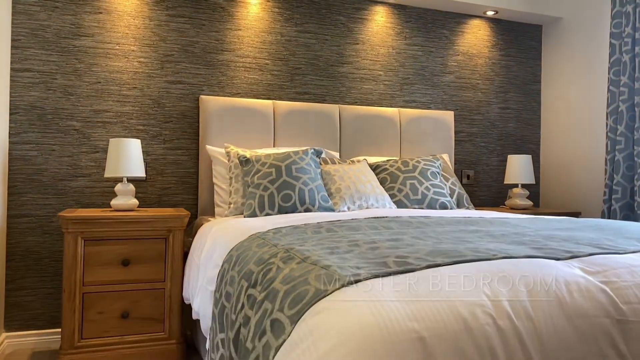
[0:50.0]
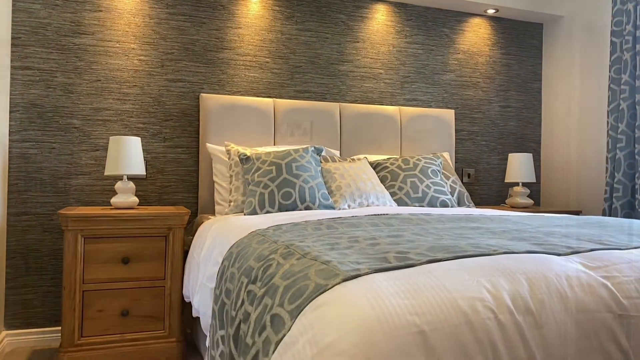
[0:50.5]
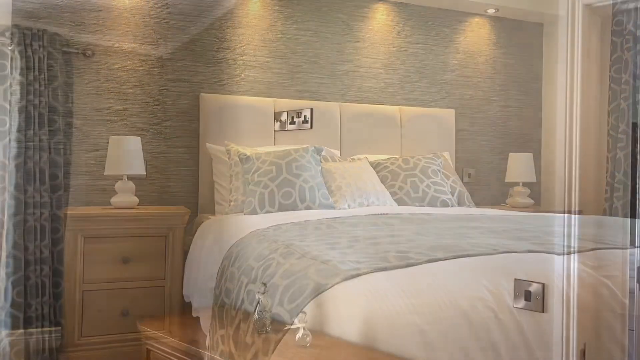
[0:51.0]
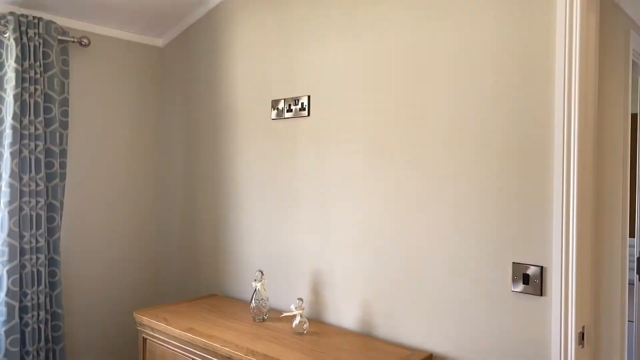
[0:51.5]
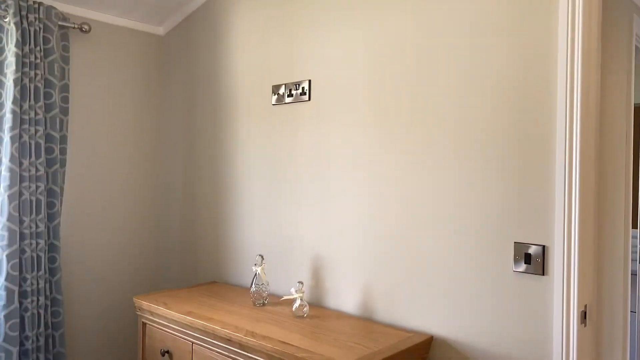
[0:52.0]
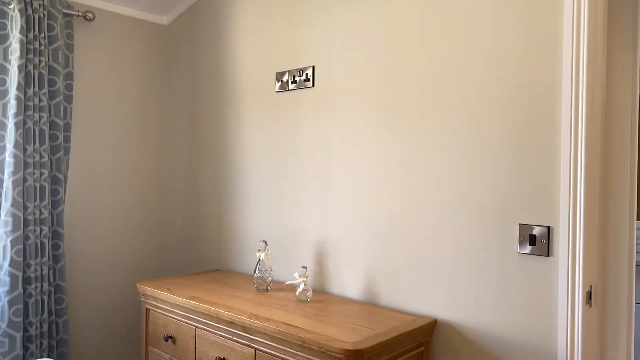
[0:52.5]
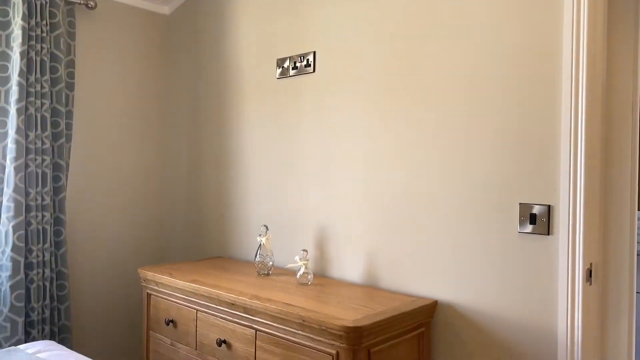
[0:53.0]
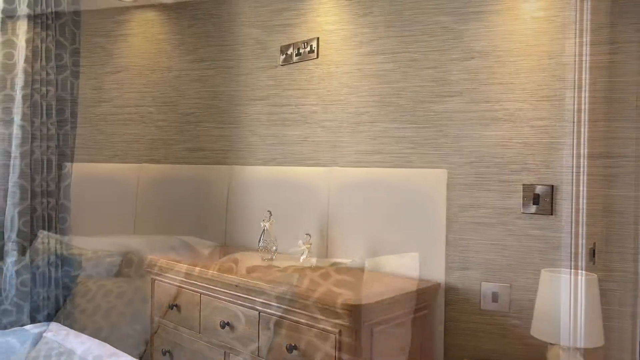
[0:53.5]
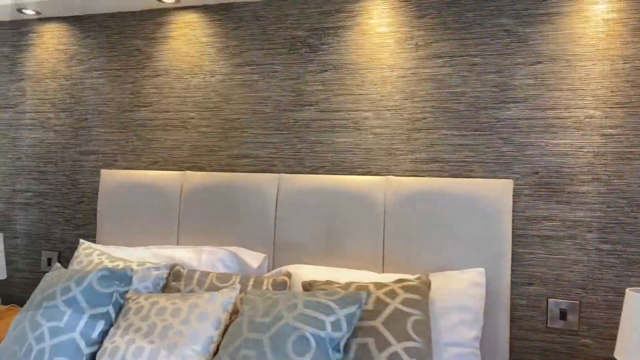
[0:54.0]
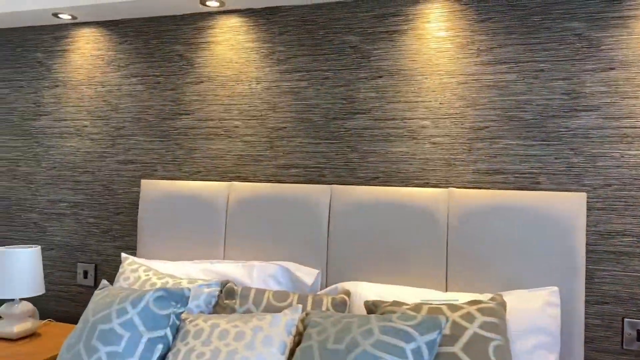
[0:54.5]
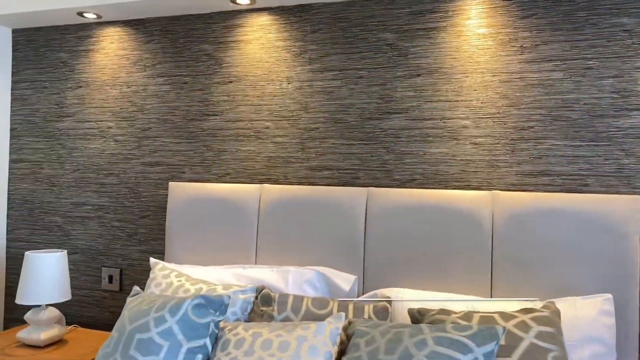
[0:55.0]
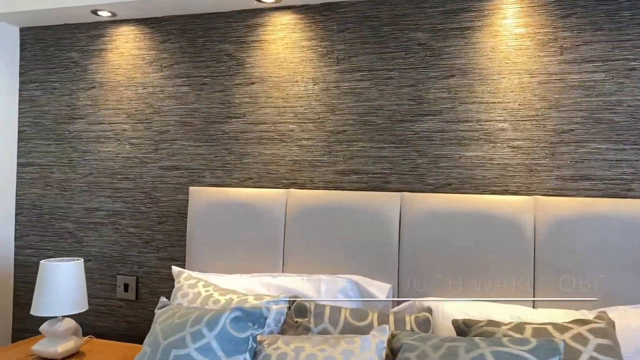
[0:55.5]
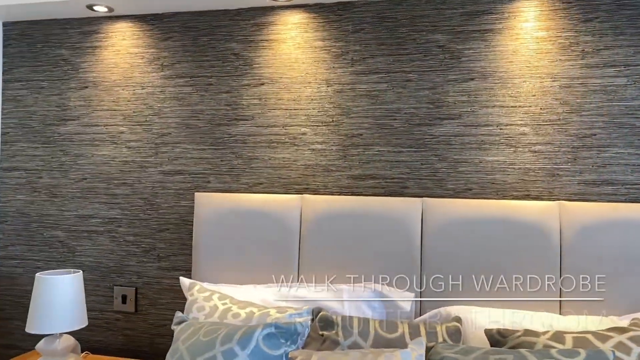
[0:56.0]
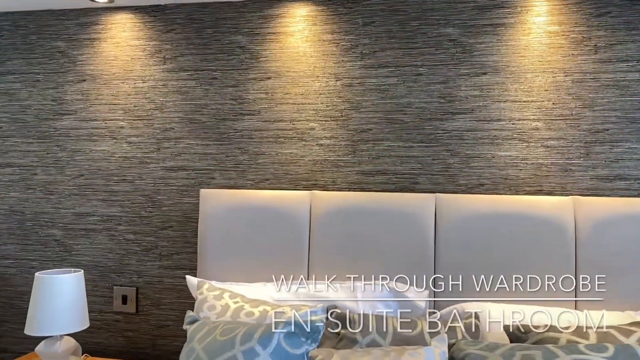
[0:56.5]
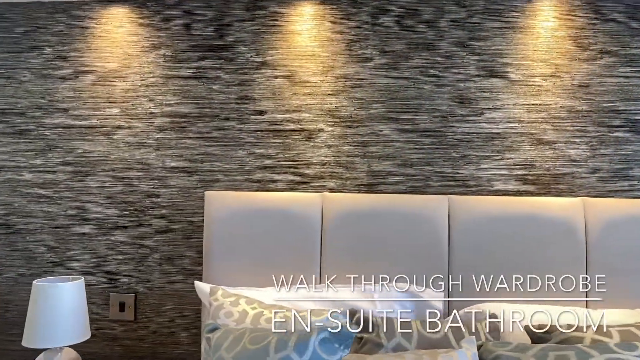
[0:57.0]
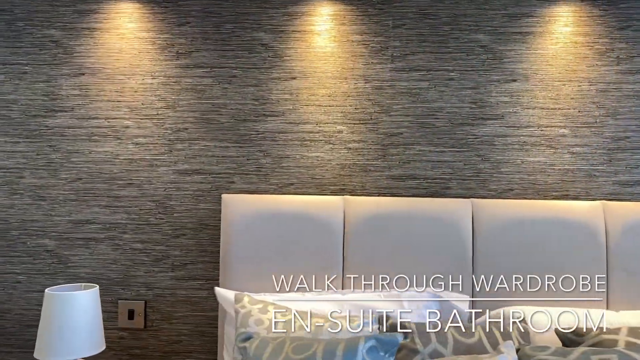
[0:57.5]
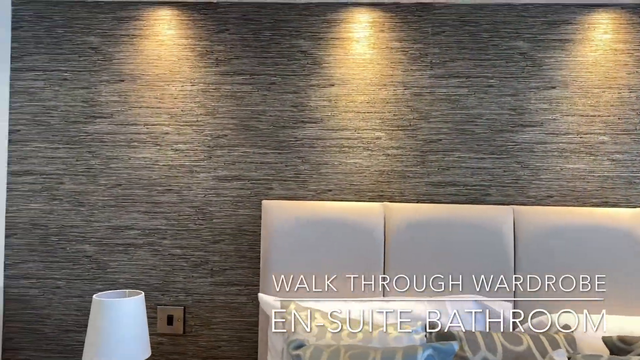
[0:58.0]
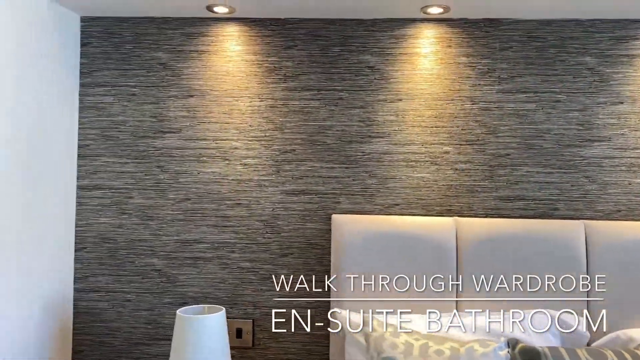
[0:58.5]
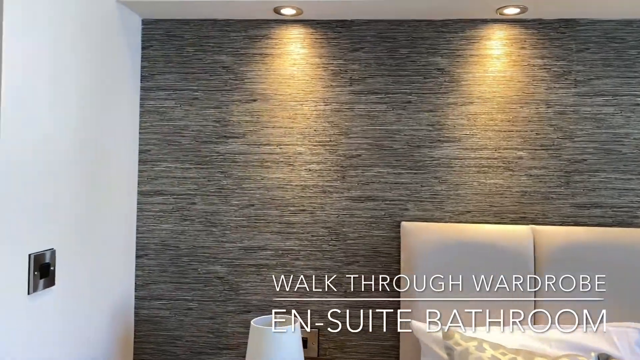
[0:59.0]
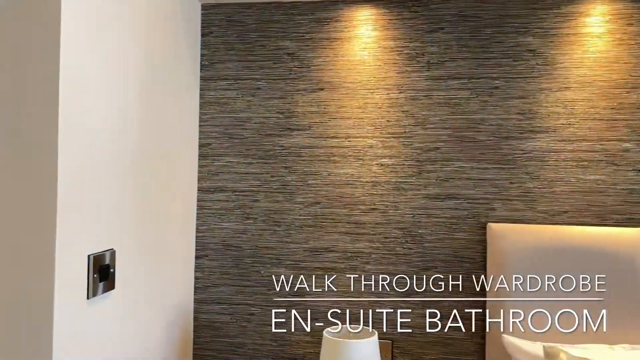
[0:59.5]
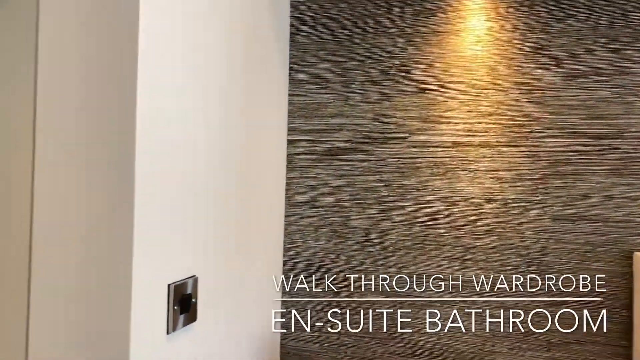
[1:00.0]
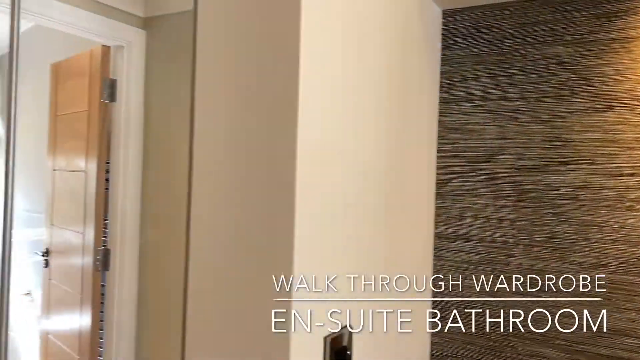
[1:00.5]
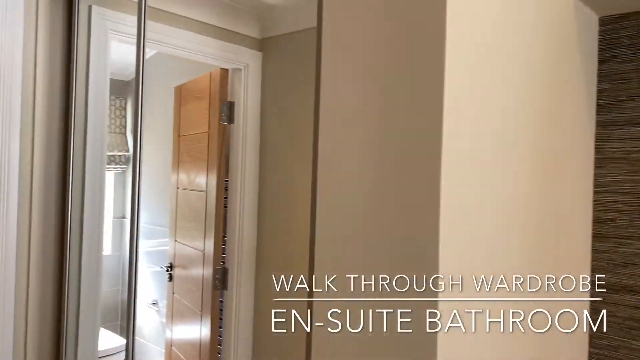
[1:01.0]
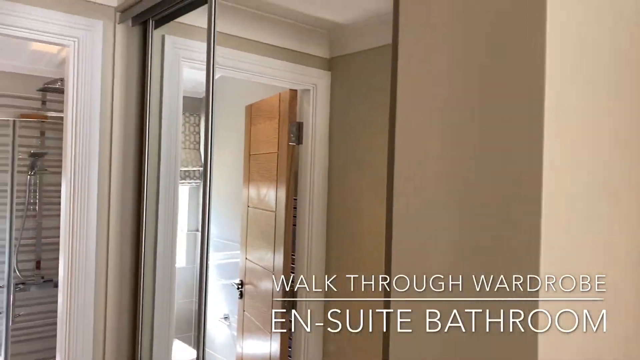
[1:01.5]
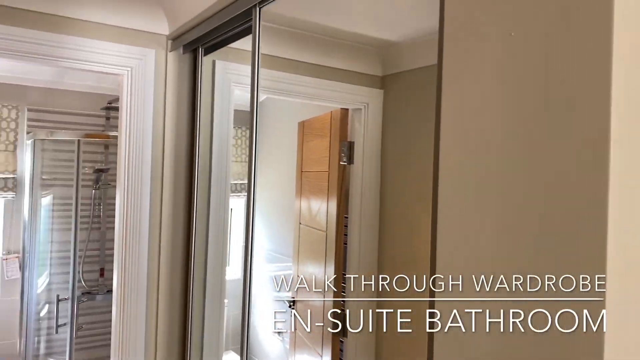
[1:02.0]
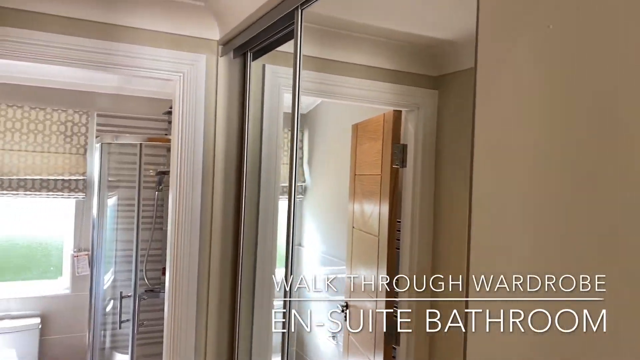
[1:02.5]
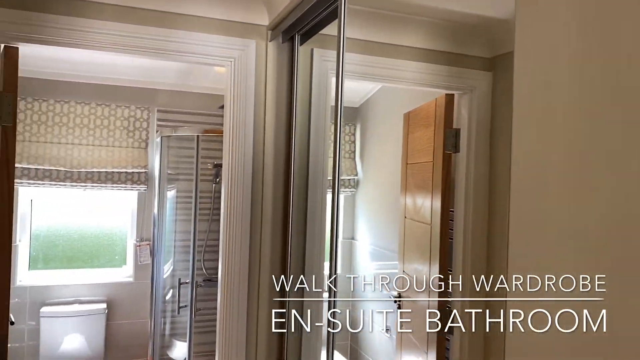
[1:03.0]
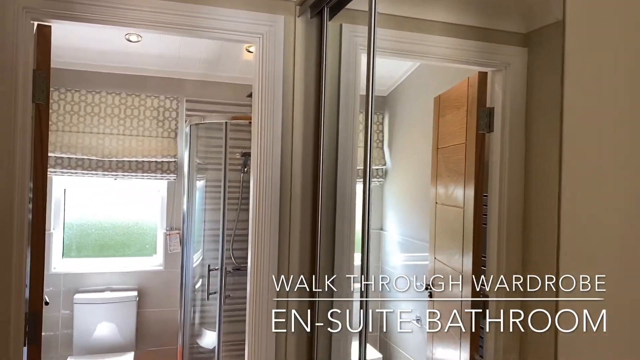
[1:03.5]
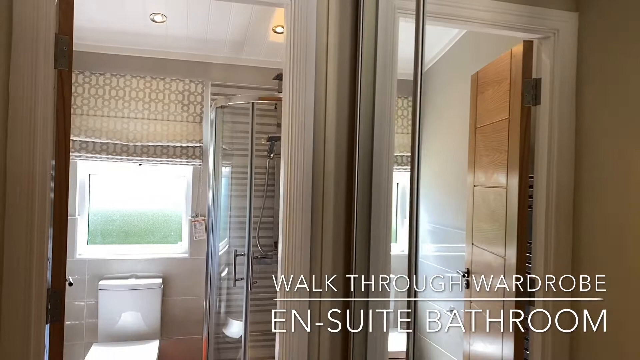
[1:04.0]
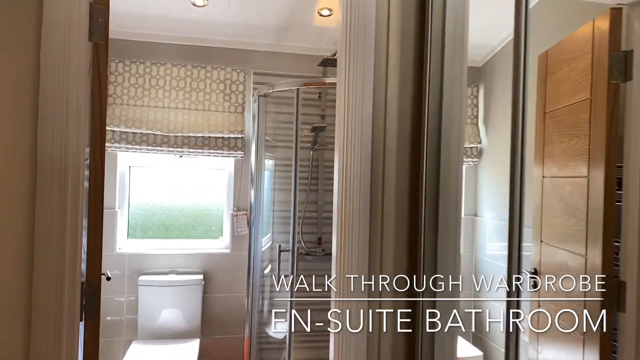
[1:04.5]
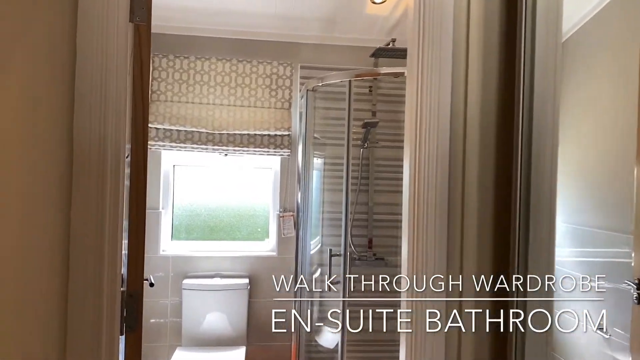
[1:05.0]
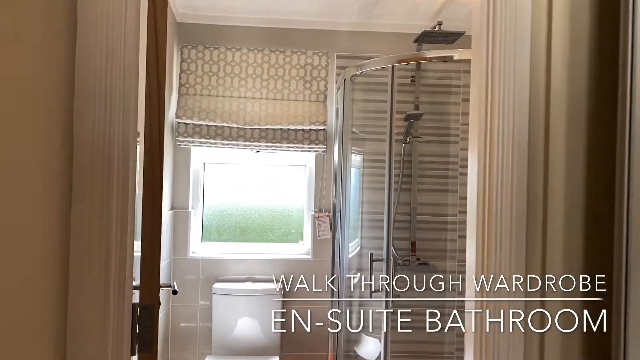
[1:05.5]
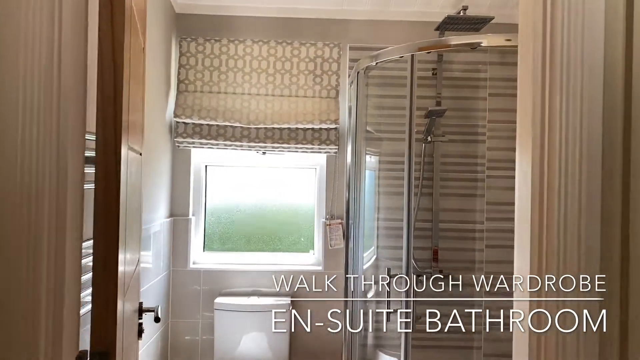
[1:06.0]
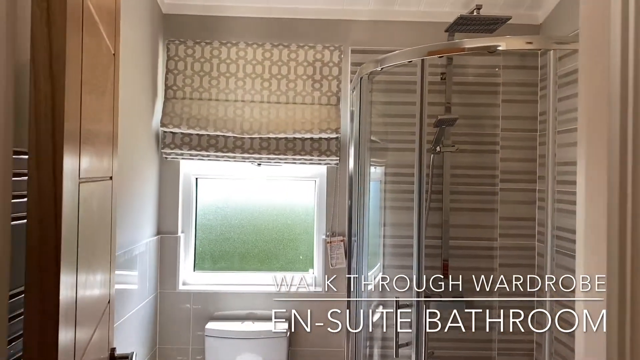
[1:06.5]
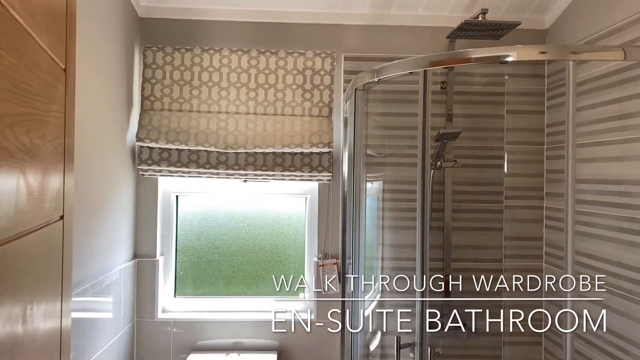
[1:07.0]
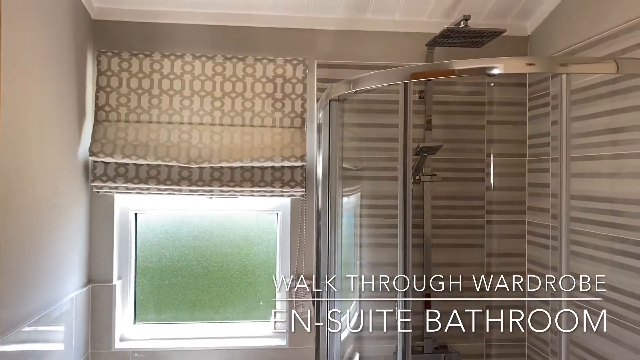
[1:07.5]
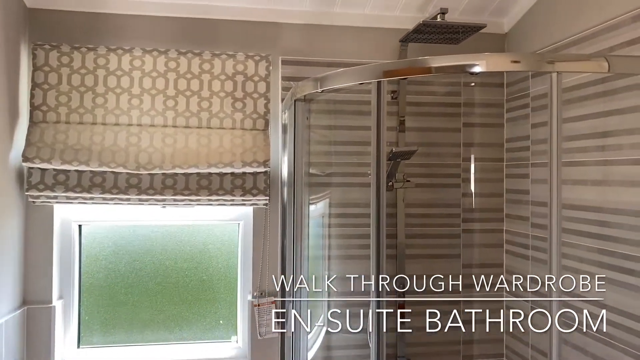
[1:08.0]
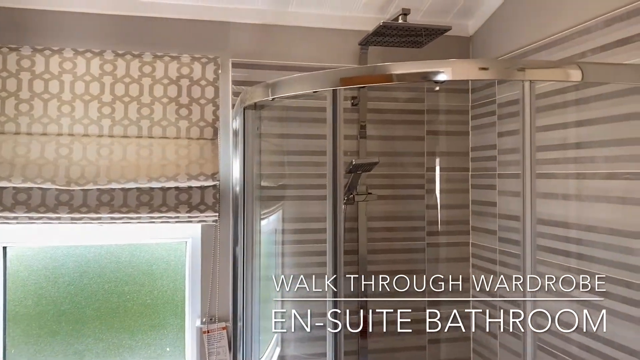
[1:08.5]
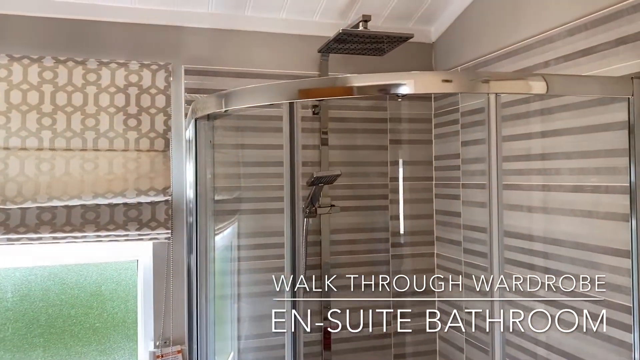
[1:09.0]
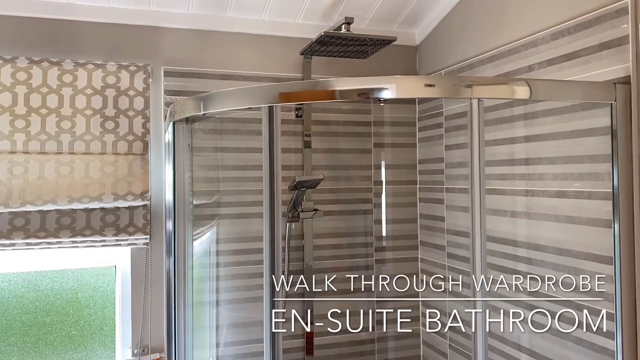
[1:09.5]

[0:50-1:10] The view moves from the bed to a mini drawer, probably across from the bed. On top of the cabinet there seem to be two glass vases or some sort of bottles with light white-yellowish ribbons wrapped around their tops. To the right of this drawer table is a light switch with a black handle bar and a metallic gray metal frame. The camera goes over to the top of the bed, and captions appear reading "walk-through wardrobe," then a white dividing line, and below it "EN-Suite Bathroom." Further to the left of the bed is the bathroom. A wood door sort of leads out to the shower; there seem to be perhaps two showers, or perhaps it is a door to a toilet. Through the main door on the left there is a shower beside the toilet, with a little window above the toilet. The shower has a flat, metallic-looking shower head and also a handheld shower head.